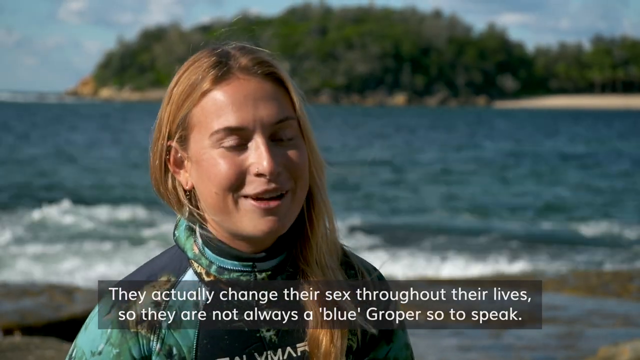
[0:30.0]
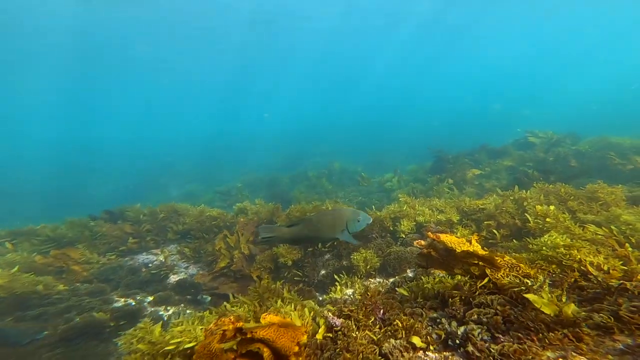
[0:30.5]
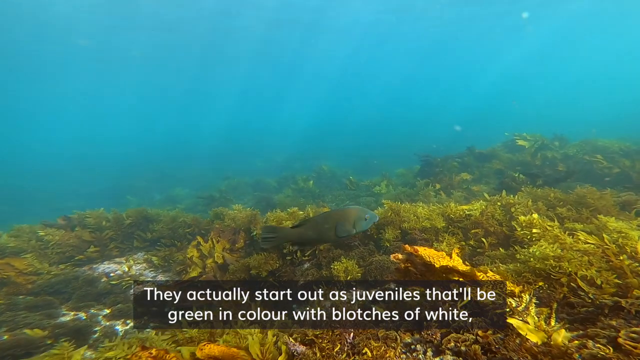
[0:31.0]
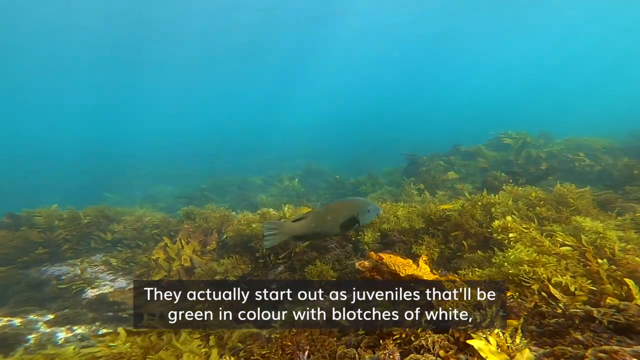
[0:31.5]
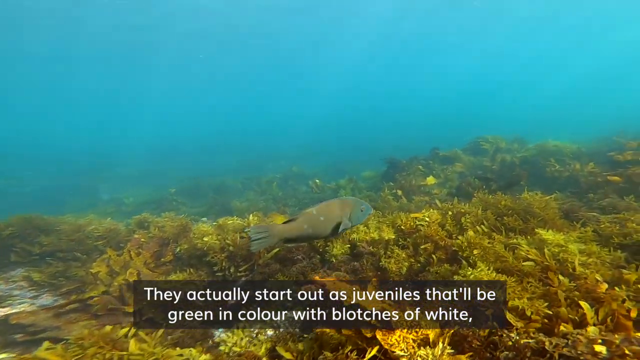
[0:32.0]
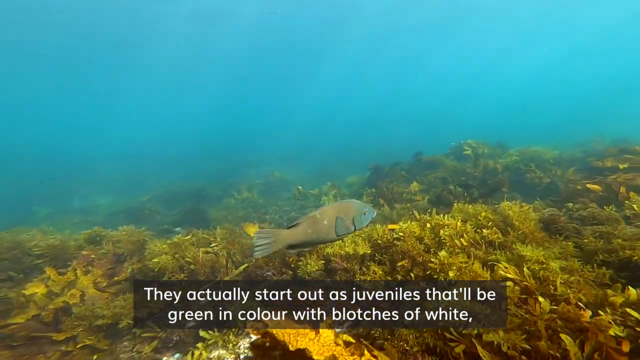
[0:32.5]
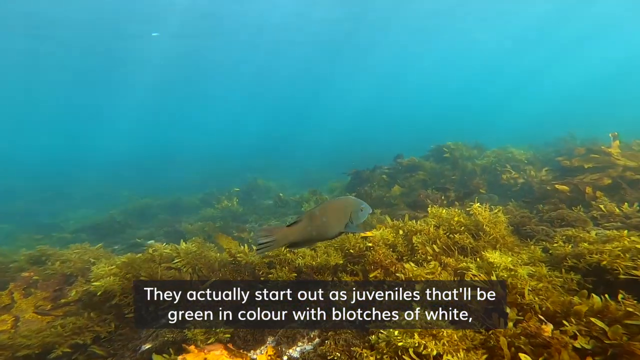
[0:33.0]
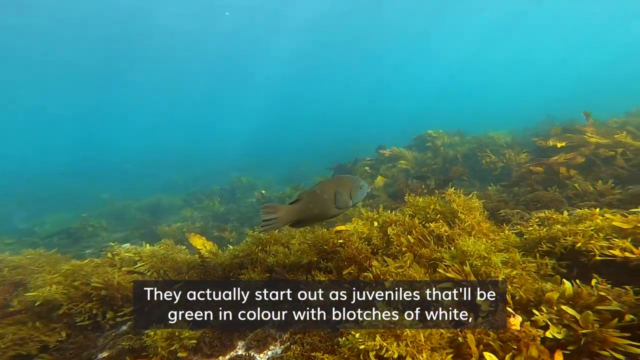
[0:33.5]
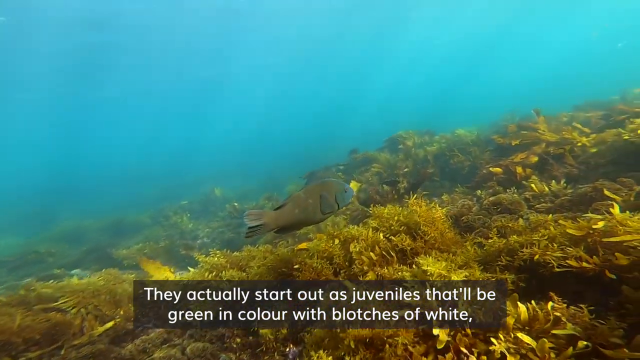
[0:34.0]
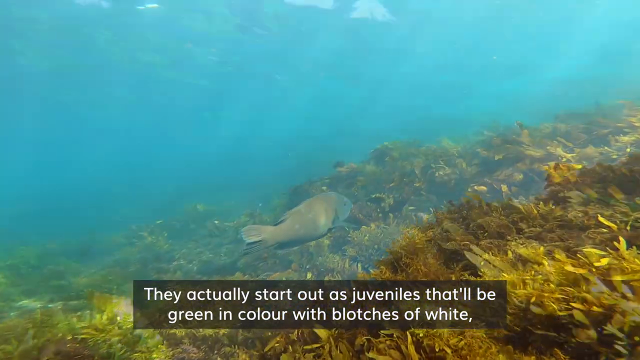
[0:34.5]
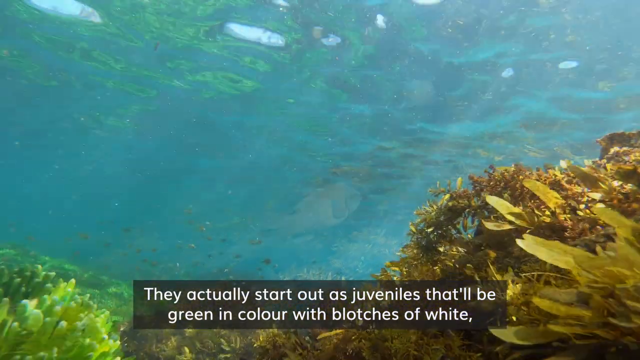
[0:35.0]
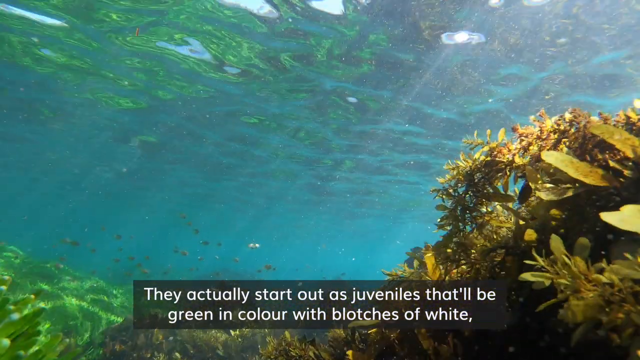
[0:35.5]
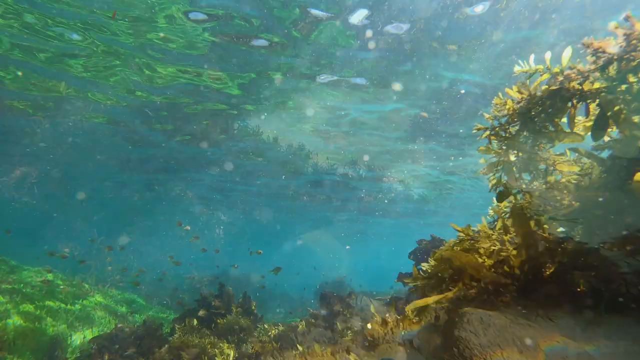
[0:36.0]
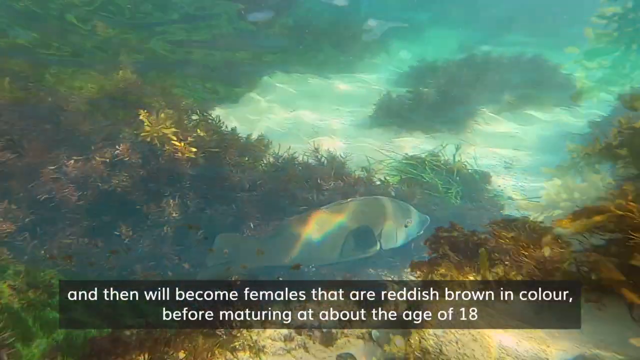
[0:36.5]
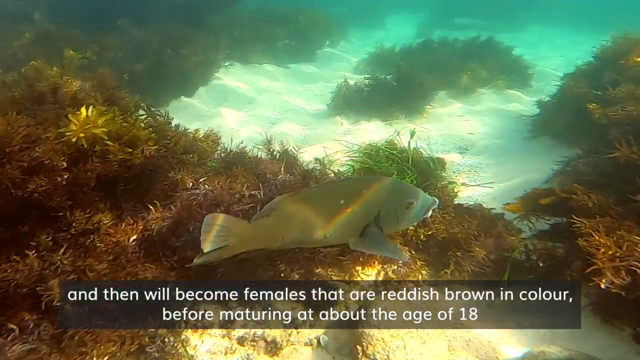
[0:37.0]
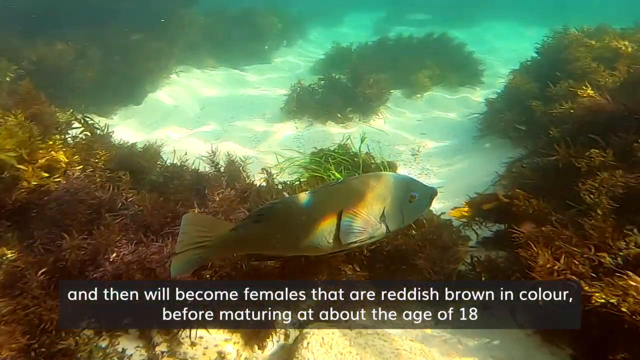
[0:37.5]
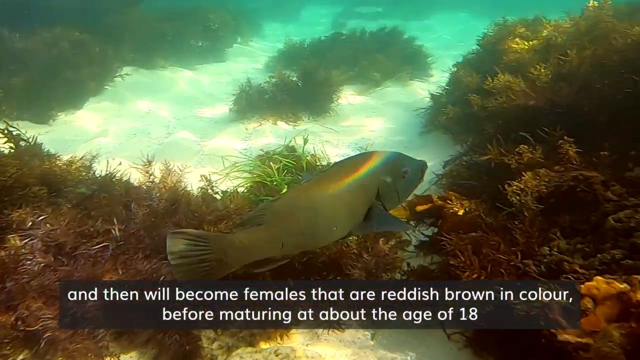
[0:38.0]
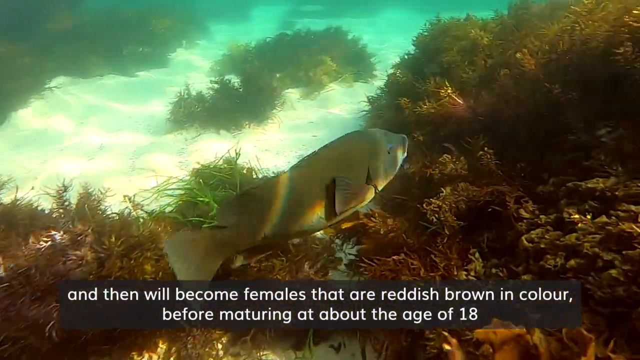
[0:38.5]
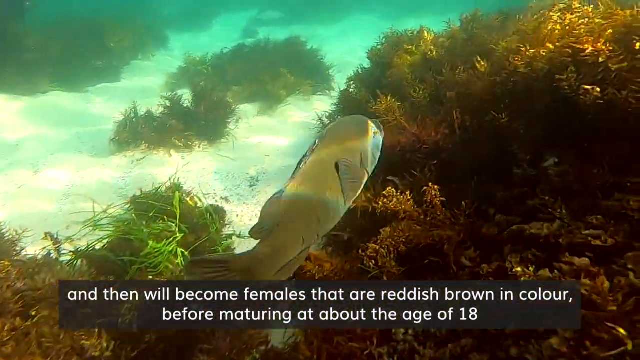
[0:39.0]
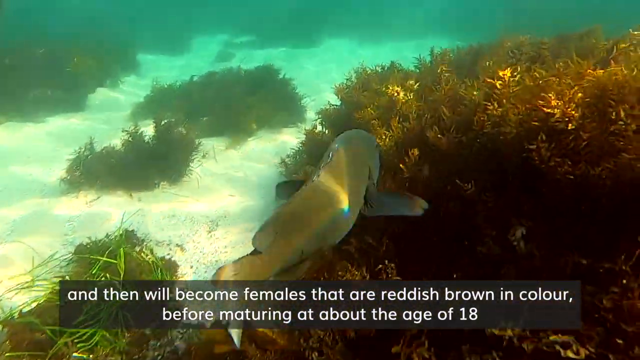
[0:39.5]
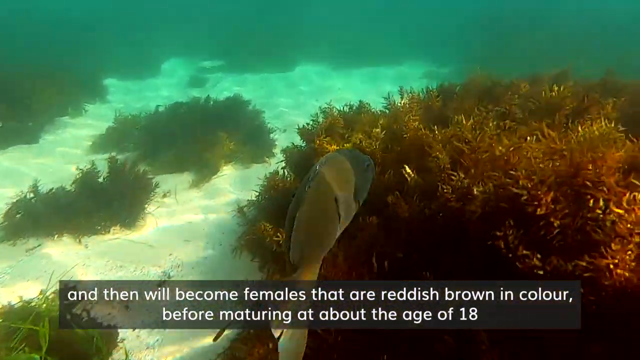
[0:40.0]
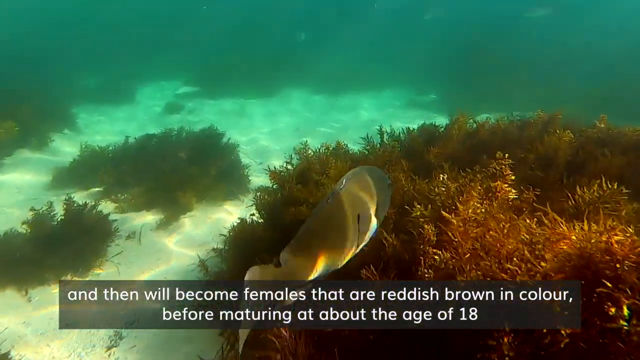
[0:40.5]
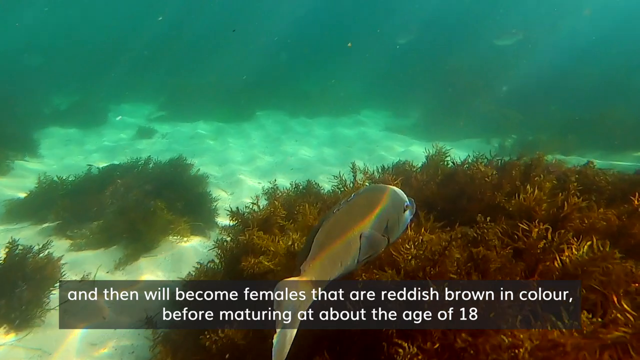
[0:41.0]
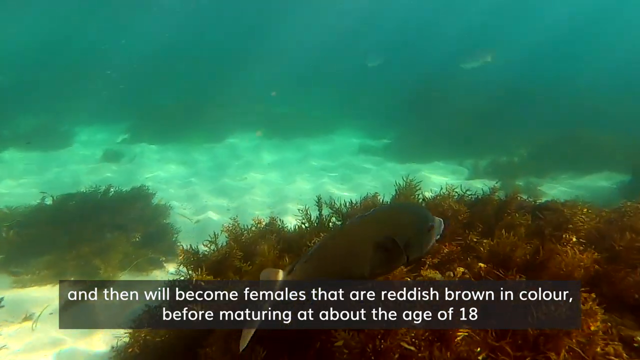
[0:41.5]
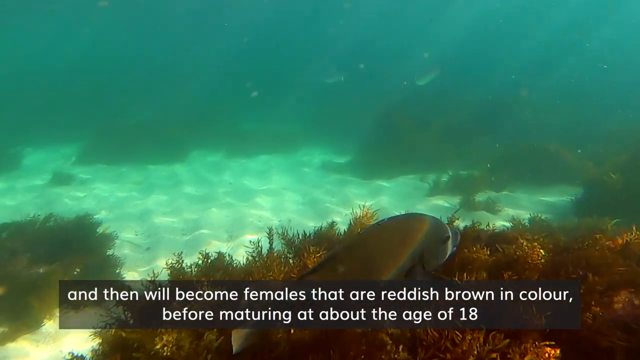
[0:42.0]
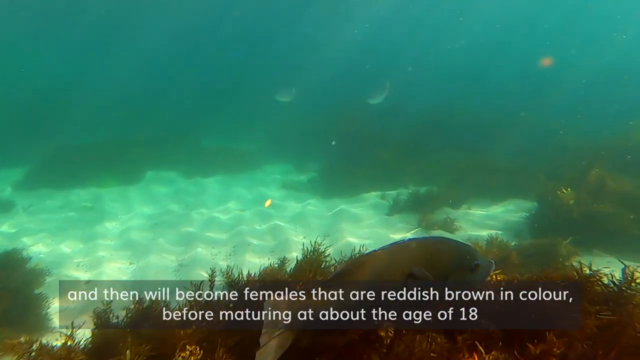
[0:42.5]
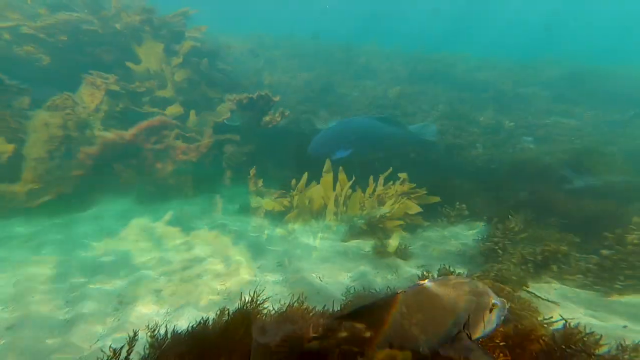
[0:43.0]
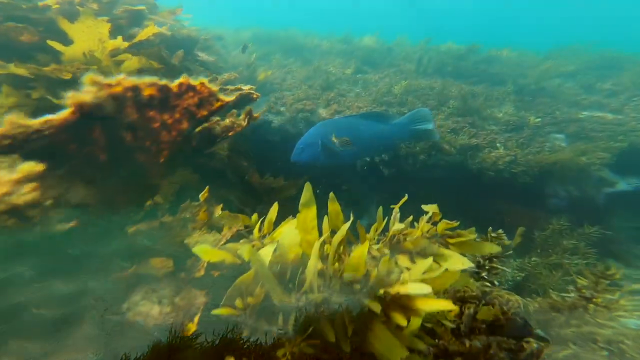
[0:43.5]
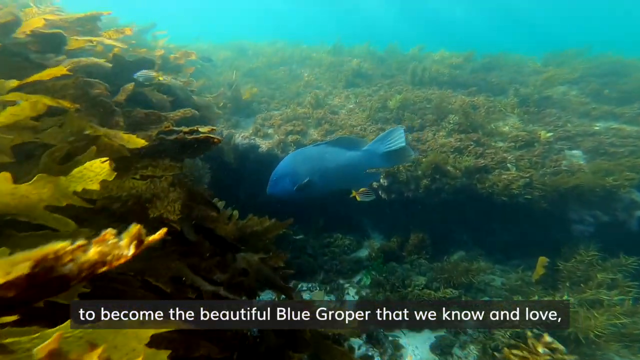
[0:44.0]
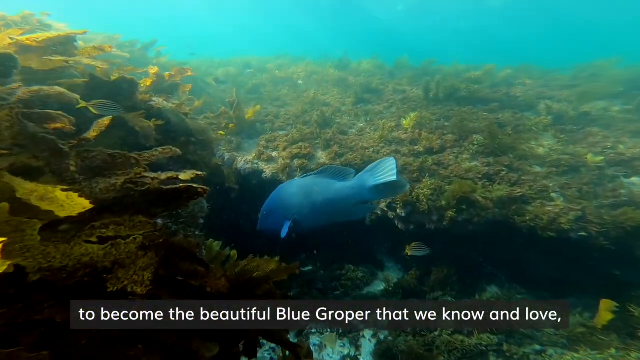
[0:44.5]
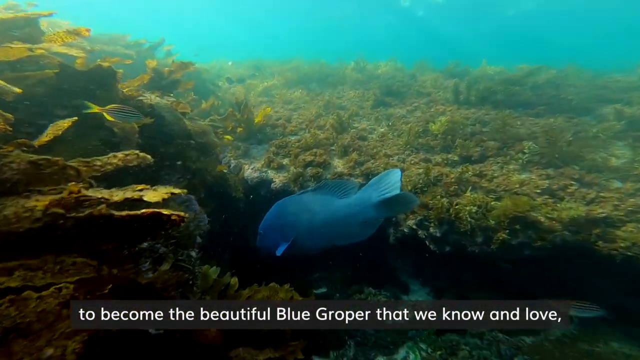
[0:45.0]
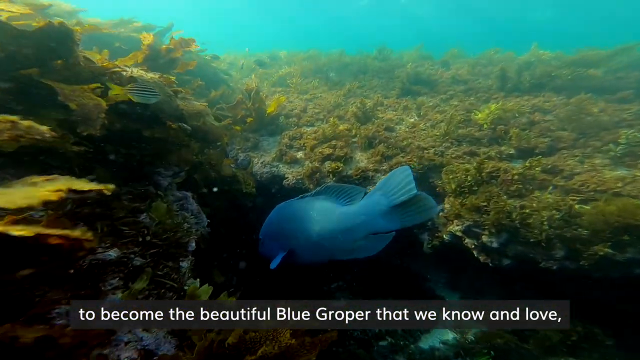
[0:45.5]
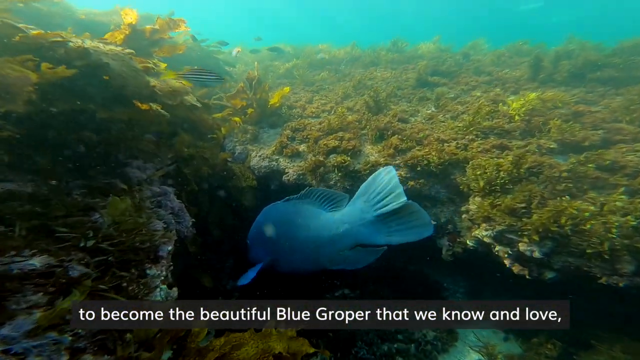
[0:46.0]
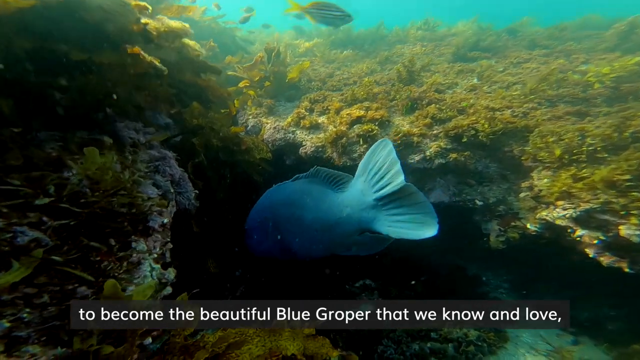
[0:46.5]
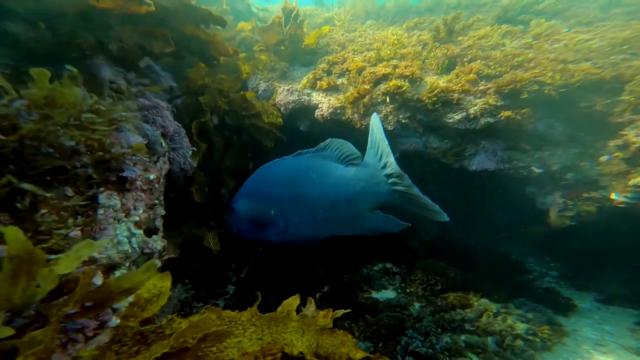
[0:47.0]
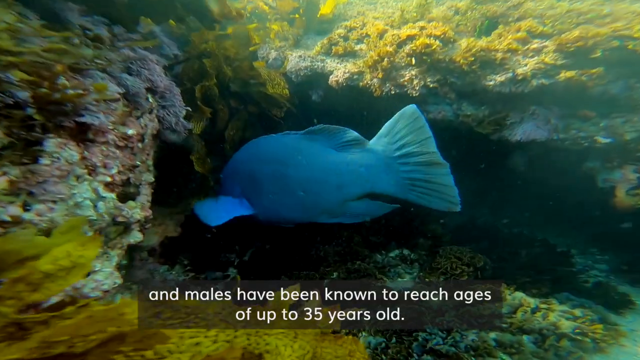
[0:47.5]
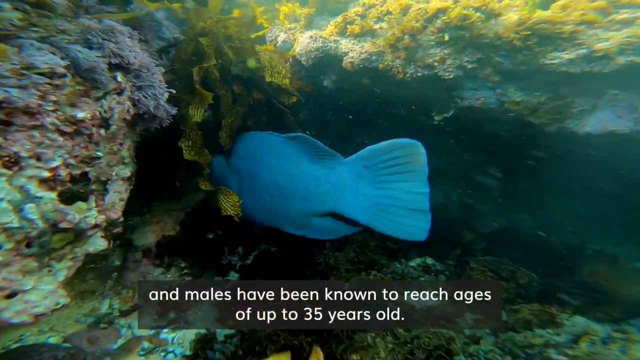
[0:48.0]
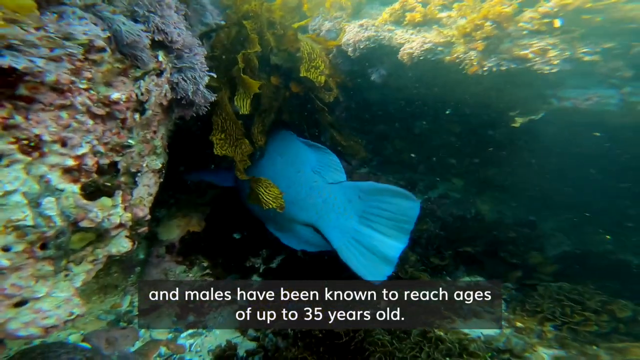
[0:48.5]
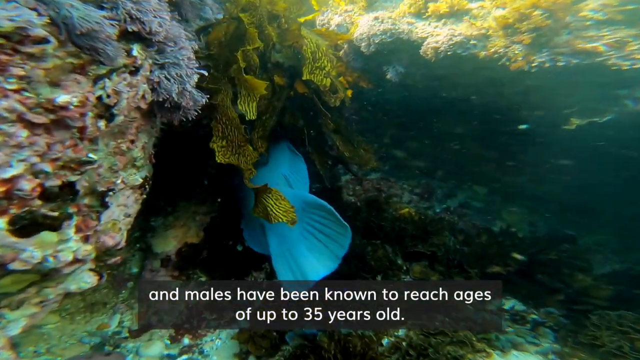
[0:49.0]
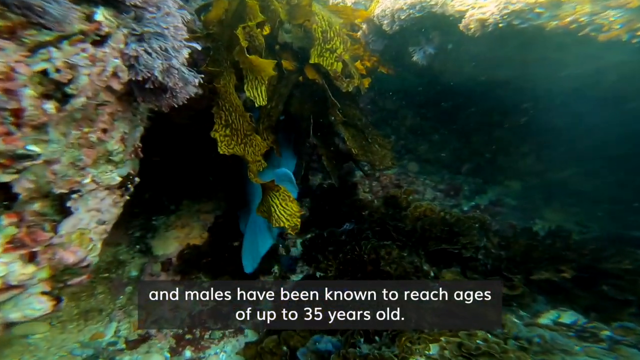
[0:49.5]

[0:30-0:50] A fish seems to be moving in the water; some parts are yellow and the water is blue. The scene changes and the same fish is seen moving. Text at the bottom of the screen reads "they actually start out as juveniles that are green in color with the blotches of white and then will become females that are reddish brown in color before maturing at about age 18 to become the beautiful blue". The fish's color seems to change, sometimes appearing blue and sometimes dark. At one point the fish seems to enter a second hole, and here the fish is entirely blue. The hole is dark, with some yellow things like leaves in it. Everything is filmed underwater.